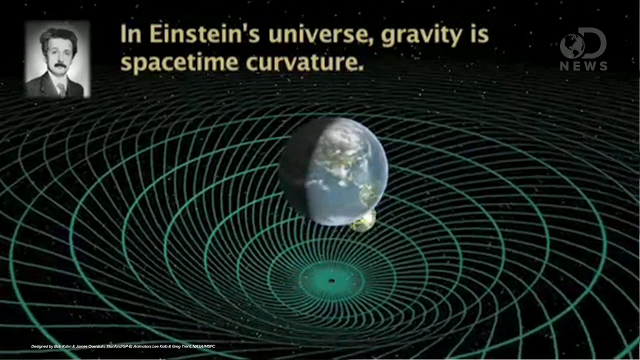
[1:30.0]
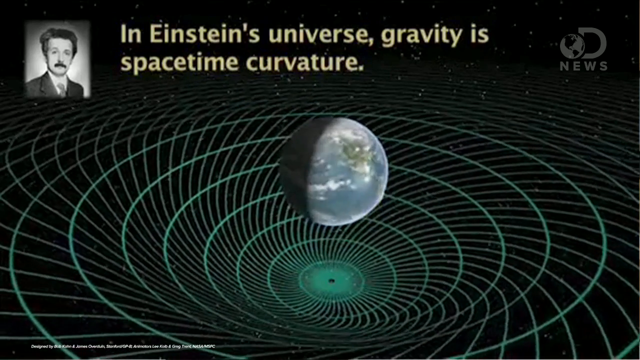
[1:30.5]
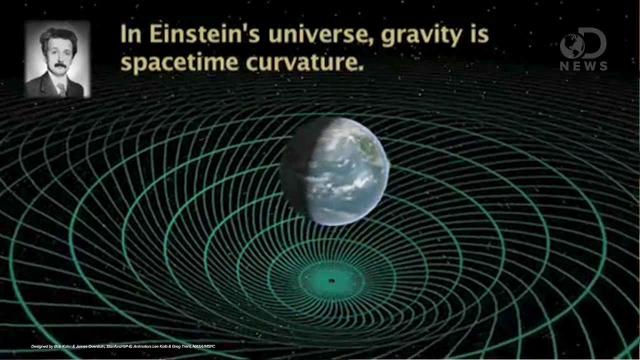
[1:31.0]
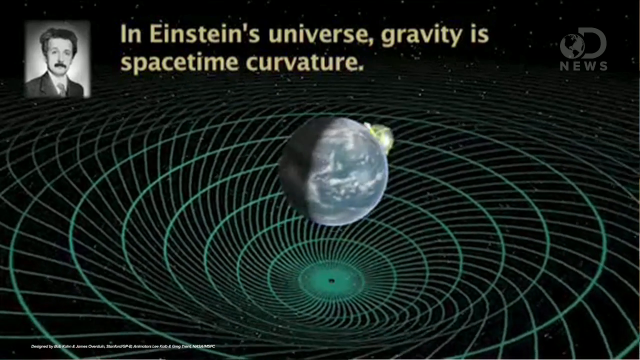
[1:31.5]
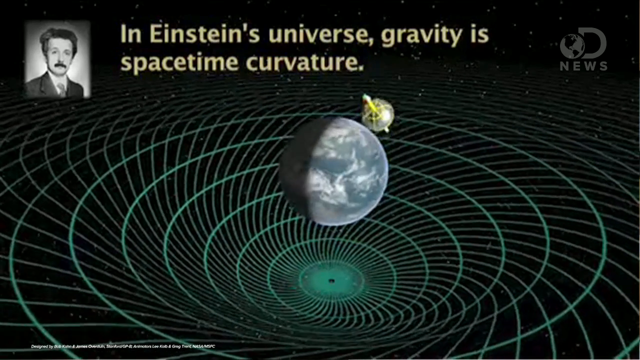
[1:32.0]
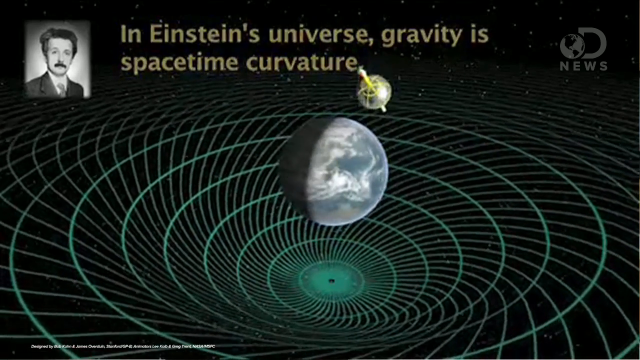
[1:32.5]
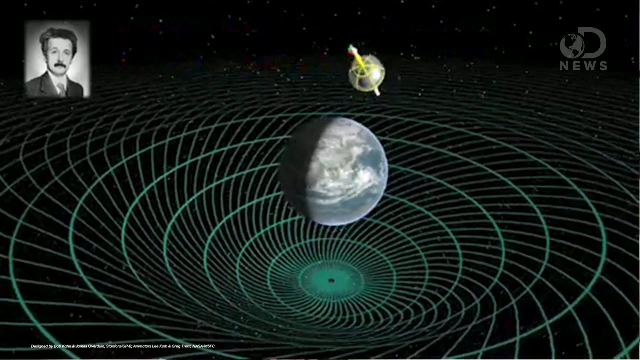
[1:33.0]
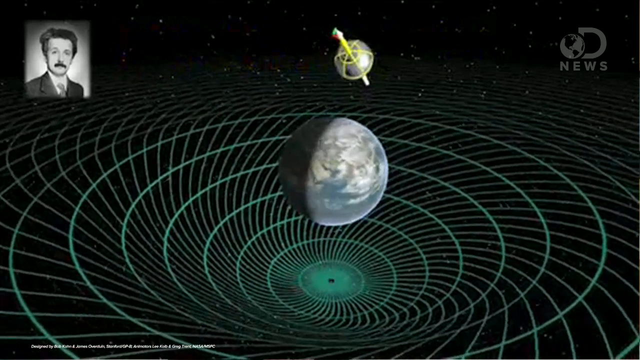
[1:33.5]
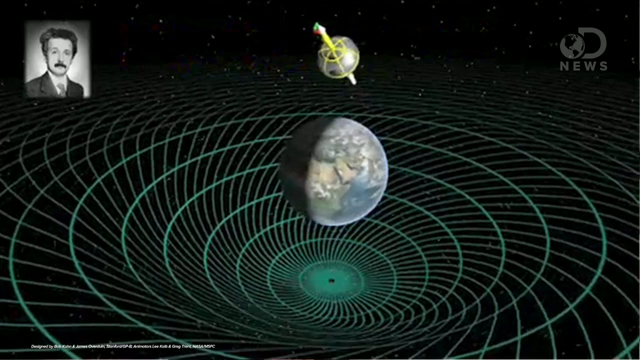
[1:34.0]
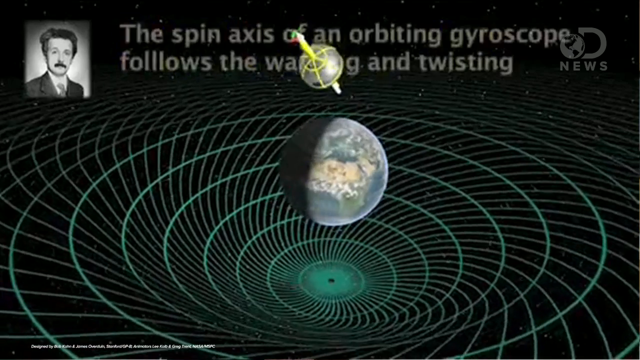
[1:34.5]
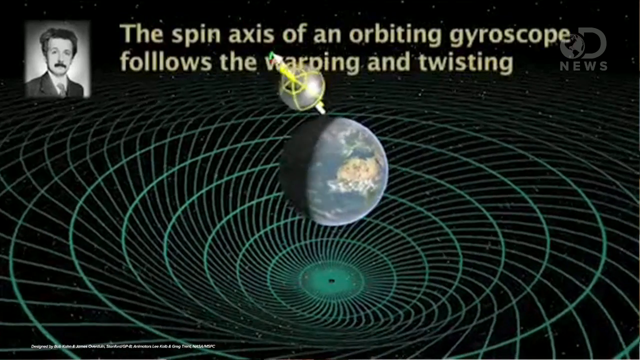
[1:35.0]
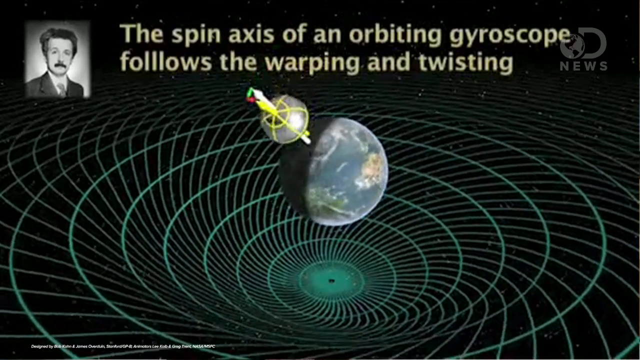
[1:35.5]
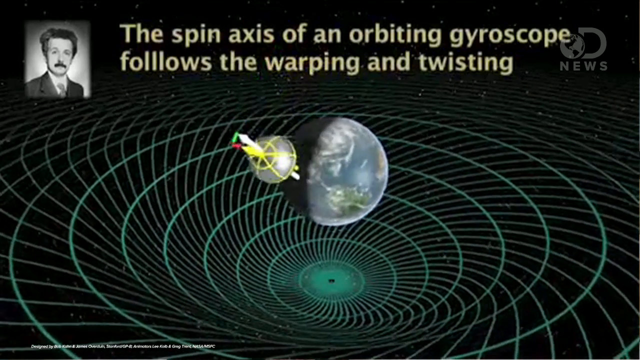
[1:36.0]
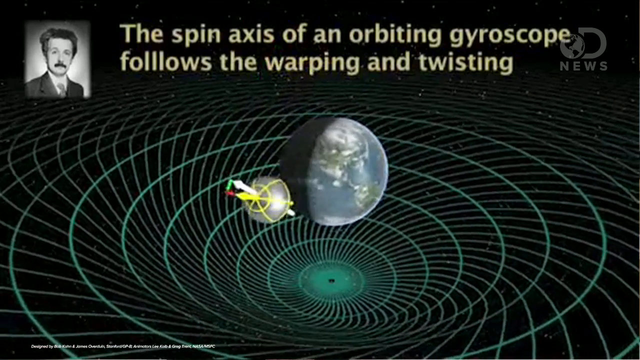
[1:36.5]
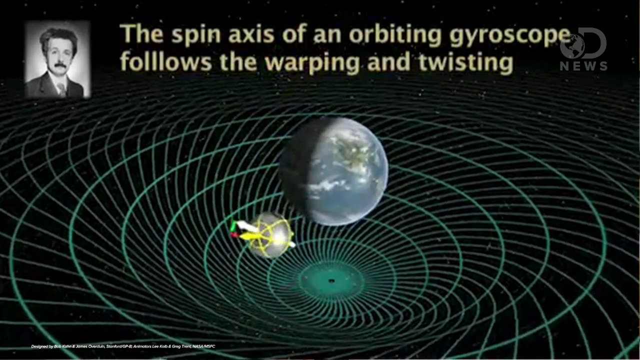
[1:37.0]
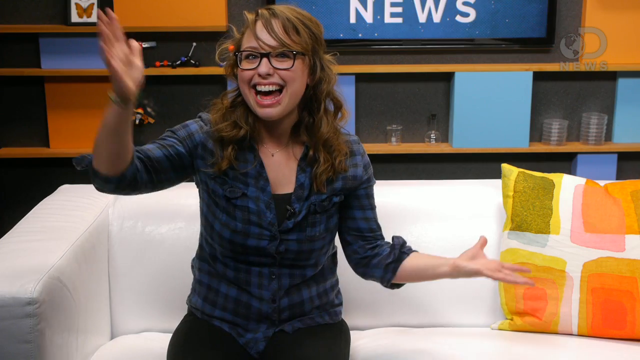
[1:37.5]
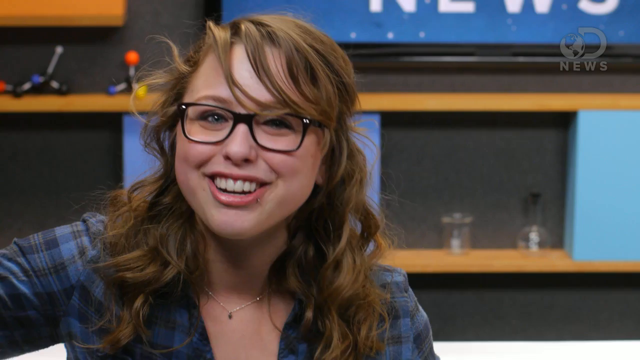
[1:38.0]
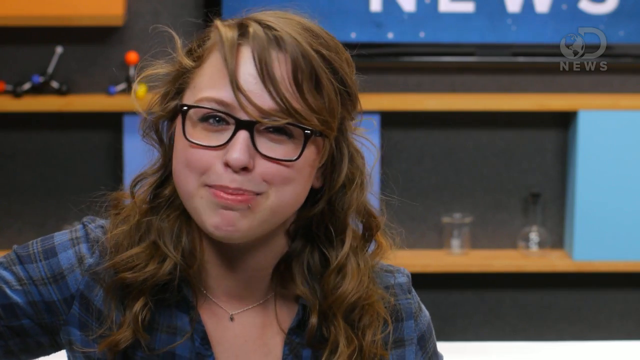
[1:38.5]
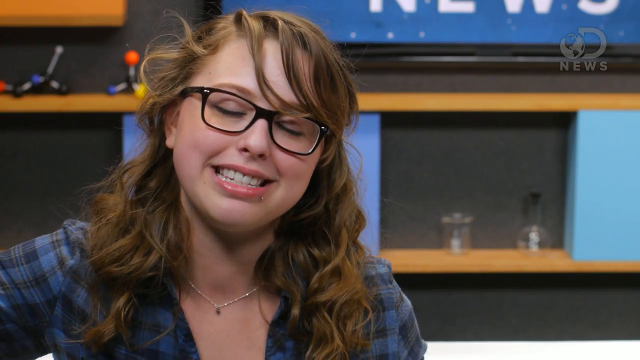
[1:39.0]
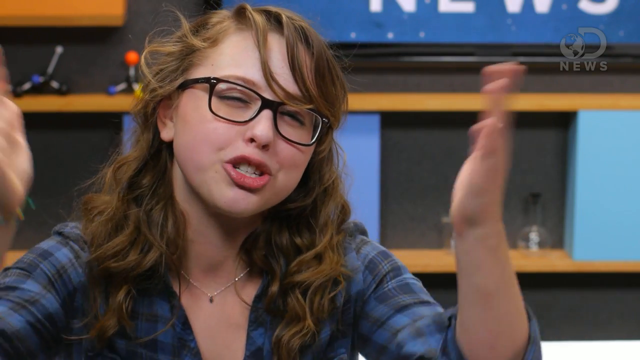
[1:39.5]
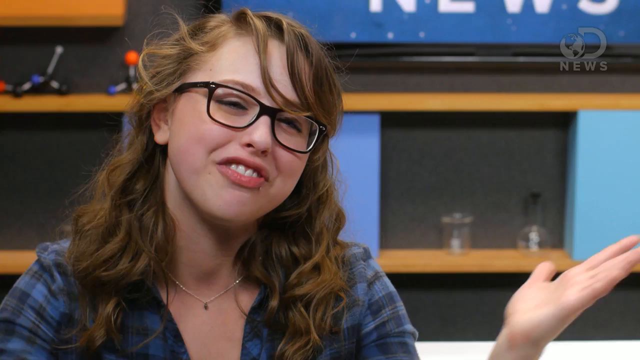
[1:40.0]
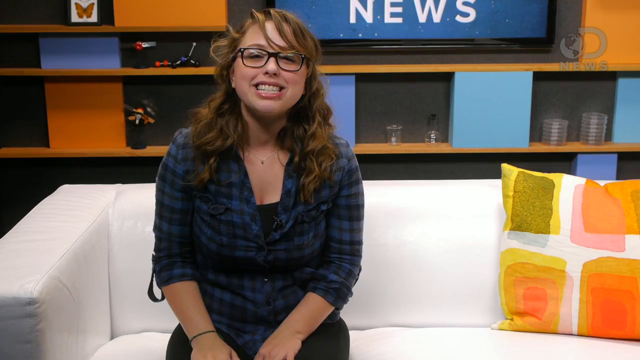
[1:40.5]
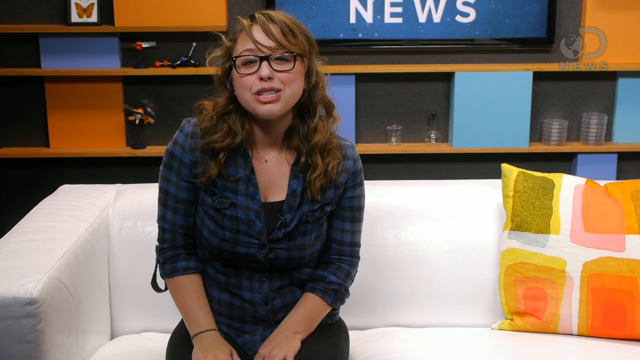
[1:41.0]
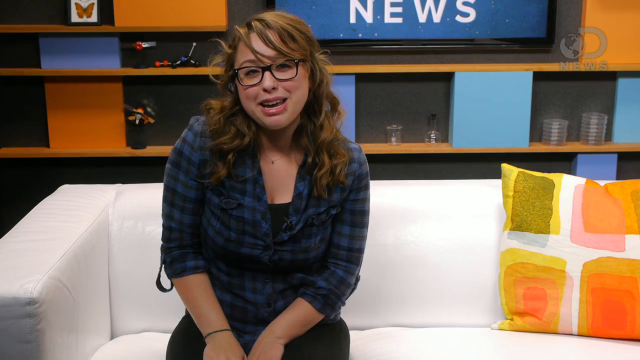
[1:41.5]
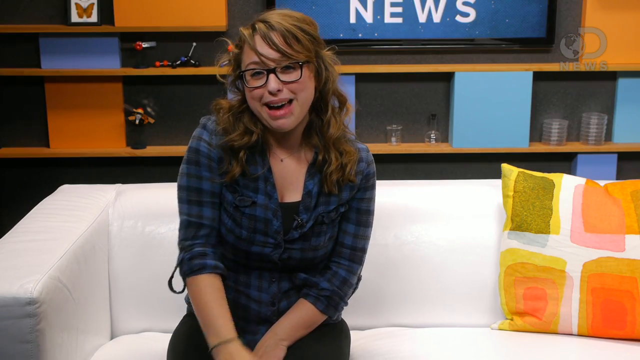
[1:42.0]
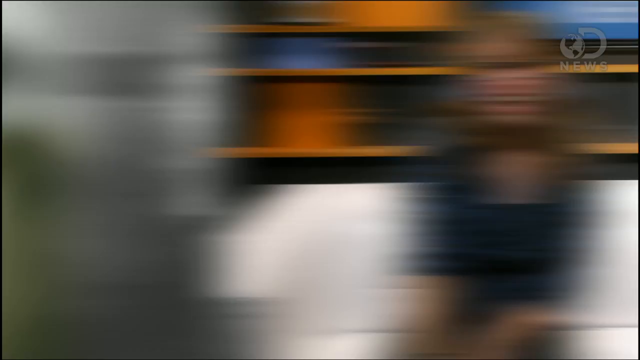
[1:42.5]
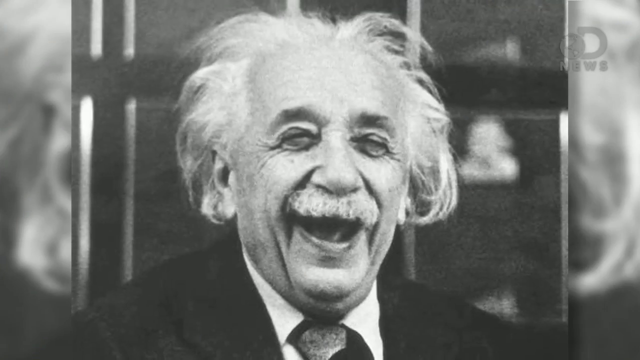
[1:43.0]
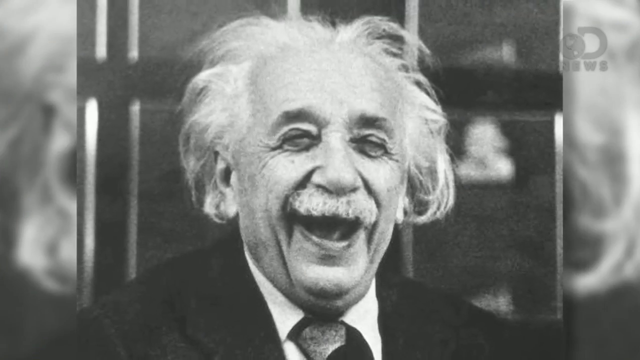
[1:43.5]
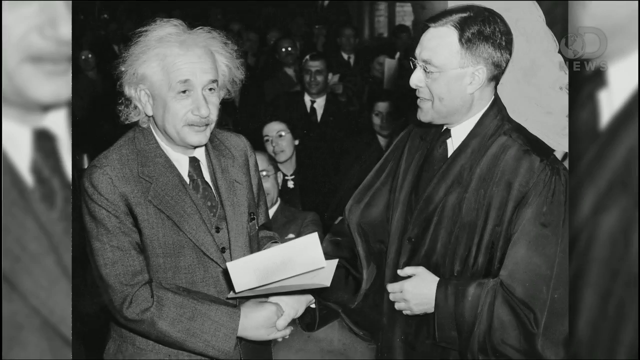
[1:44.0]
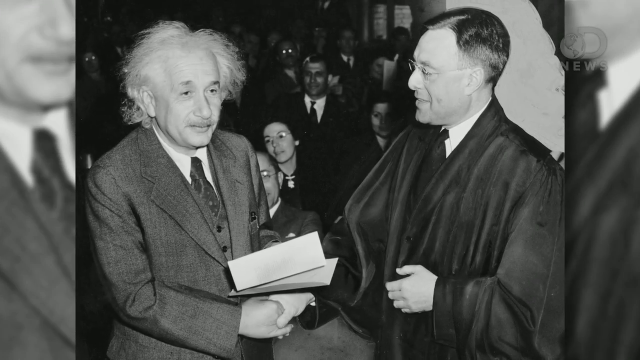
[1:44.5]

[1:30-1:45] A spinning earth is shown with an axis of orbiting gravity, as something that looks kind of like a satellite goes around the earth. A picture shows Einstein laughing, with white hair and his eyes almost shut. Another man shakes his hand, and it looks like Einstein might be receiving some sort of award. The man shaking hands with him wears a dark black robe with a white dress shirt and a tie underneath, and almost looks like a judge of some sort. A picture in the corner looks like it could be Einstein when he was younger, with darker hair and a bushy black mustache.